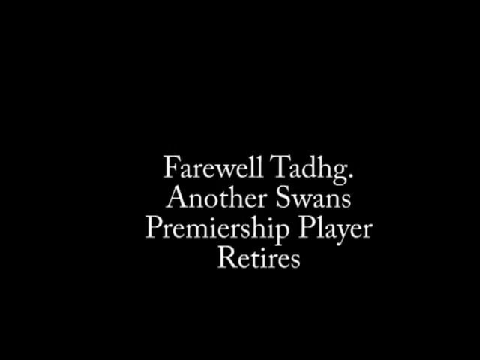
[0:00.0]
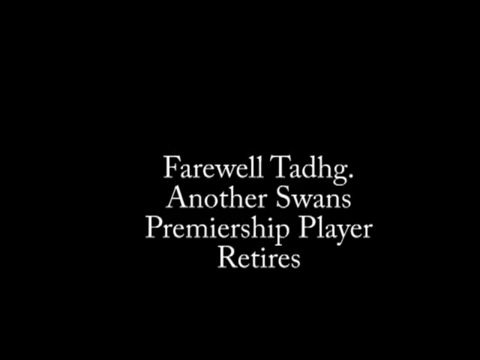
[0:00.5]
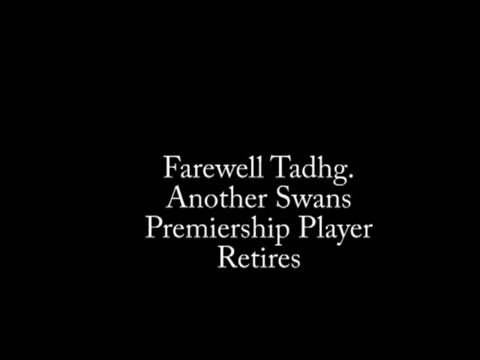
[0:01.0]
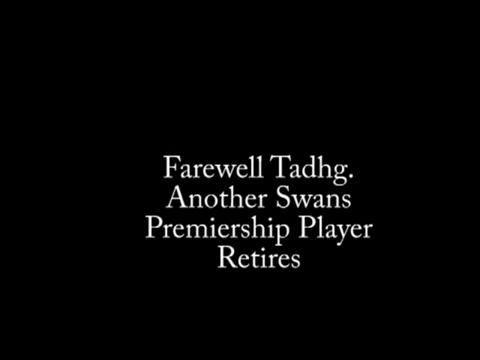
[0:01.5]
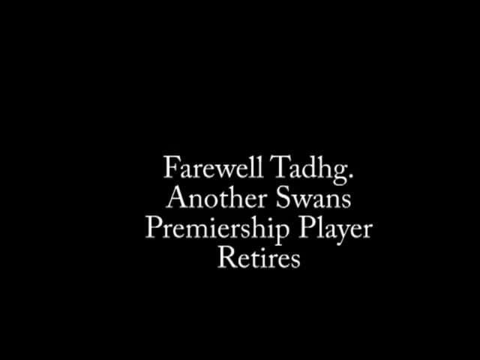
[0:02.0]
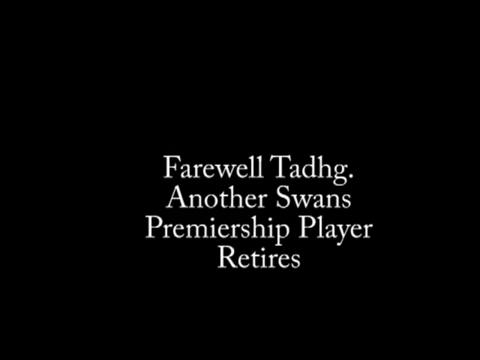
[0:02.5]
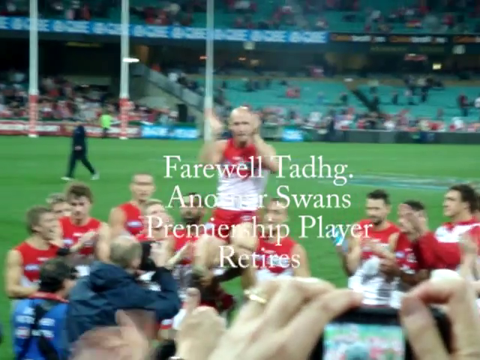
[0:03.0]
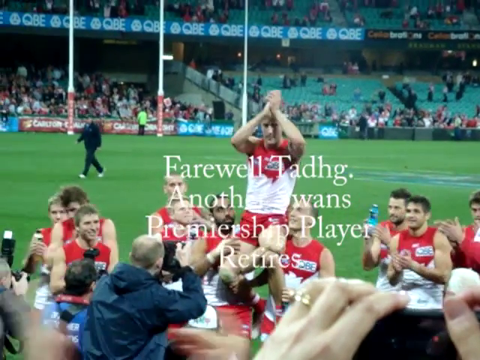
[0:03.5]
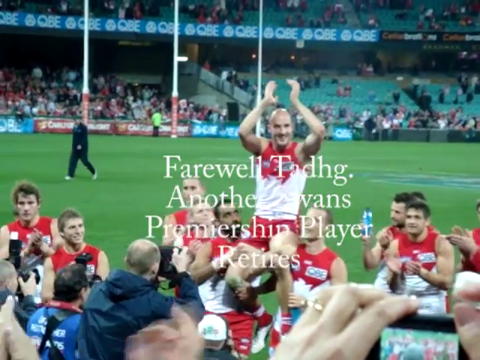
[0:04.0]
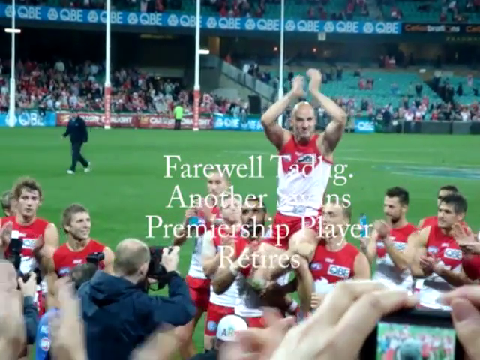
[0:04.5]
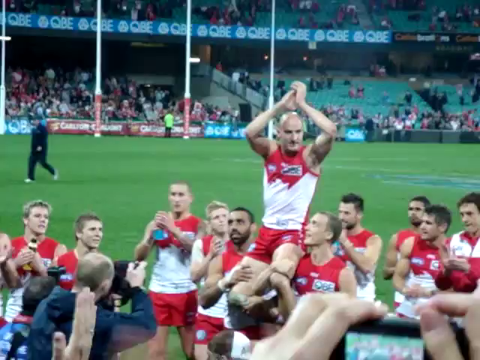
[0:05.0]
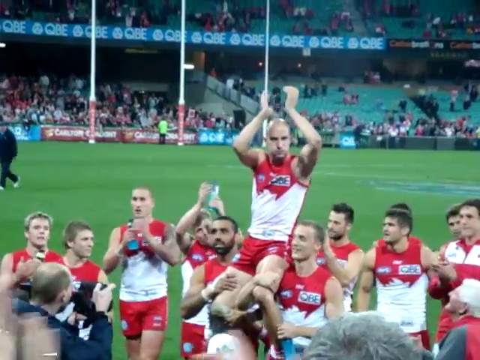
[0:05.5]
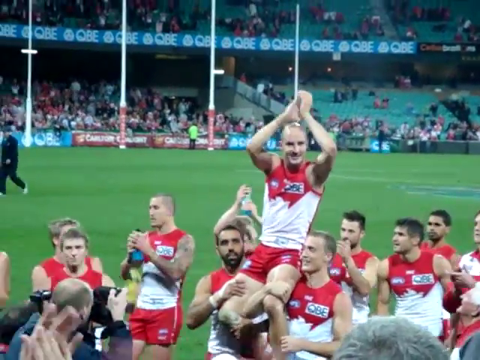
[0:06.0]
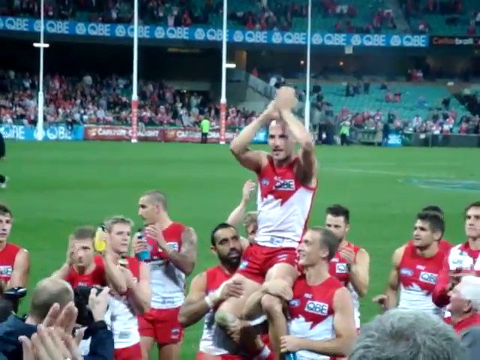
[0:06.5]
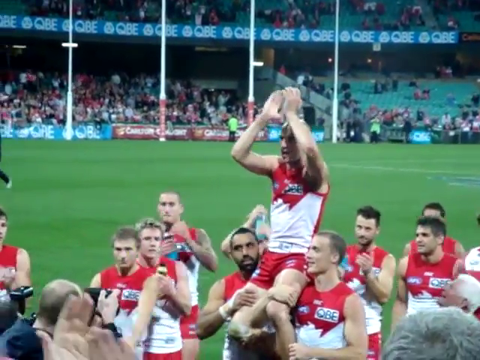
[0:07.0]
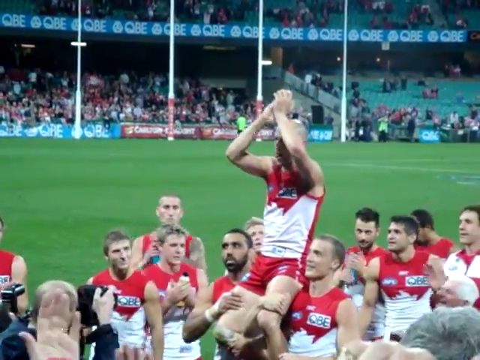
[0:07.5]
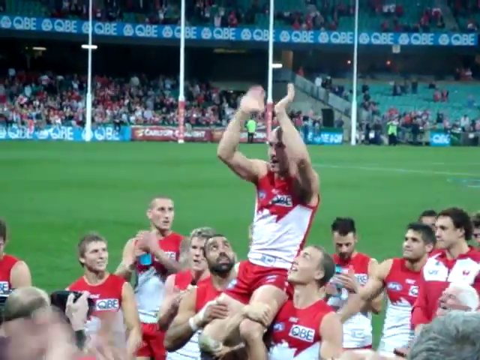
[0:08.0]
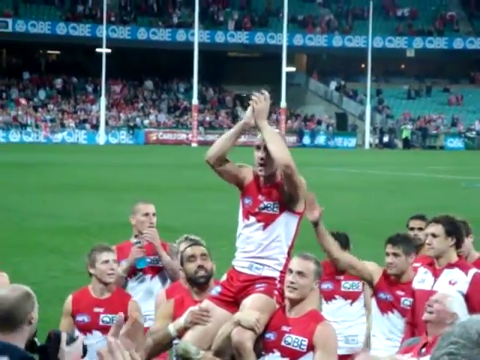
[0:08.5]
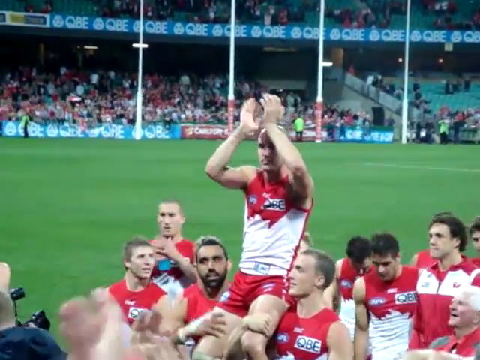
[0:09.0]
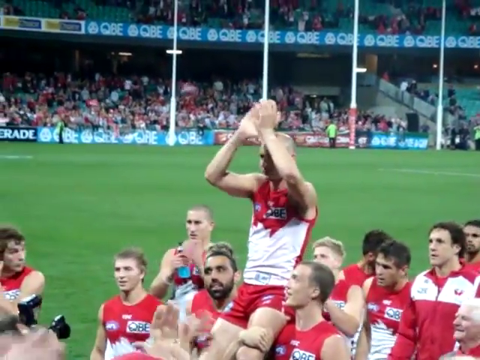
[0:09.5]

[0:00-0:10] The video opens on a text screen with white letters on a black background reading "Farewell Tadhg. Another Swans Premiership Player Retires." It then cuts to a man in a red and white jersey tank top and red shorts who is being held up by similarly dressed teammates. A group of players in the background clap and look at him as he is carried along the edge of the field. Green AstroTurf is visible in the background, with stadium bleachers behind it. The stadium is not full, but a good number of people are watching. Along the front of the bleachers, in the upper area as well as at ground level, are many blue banners with the letters QBE and a small logo next to them.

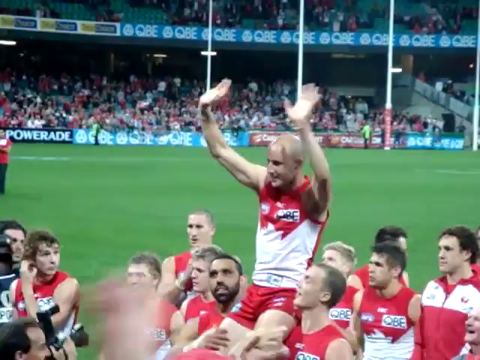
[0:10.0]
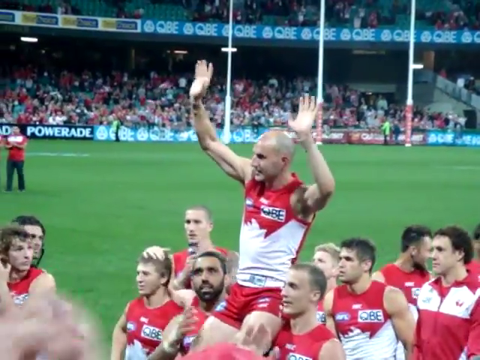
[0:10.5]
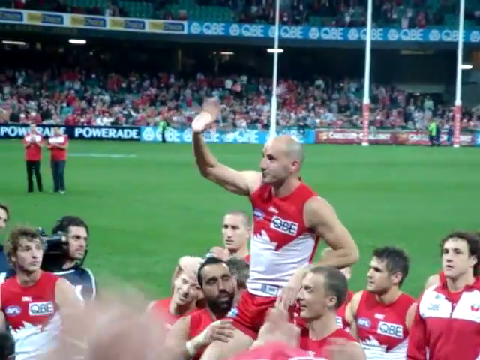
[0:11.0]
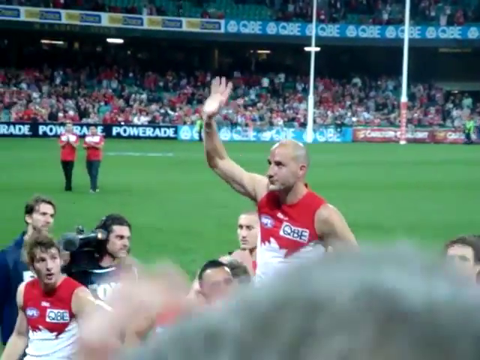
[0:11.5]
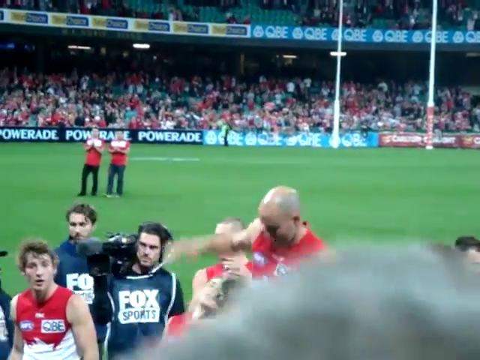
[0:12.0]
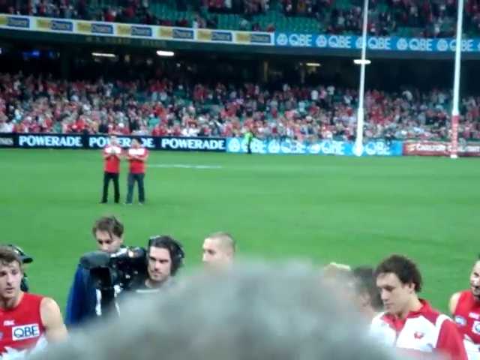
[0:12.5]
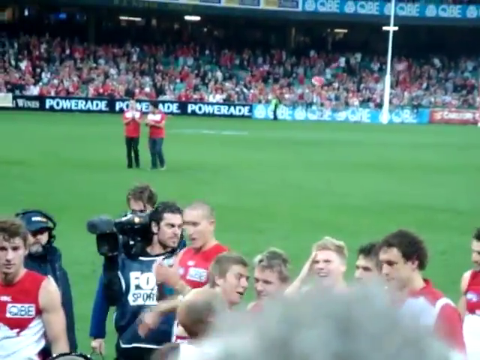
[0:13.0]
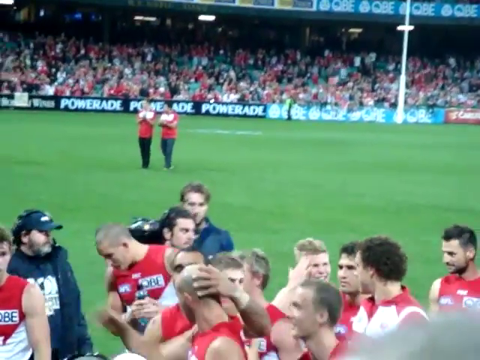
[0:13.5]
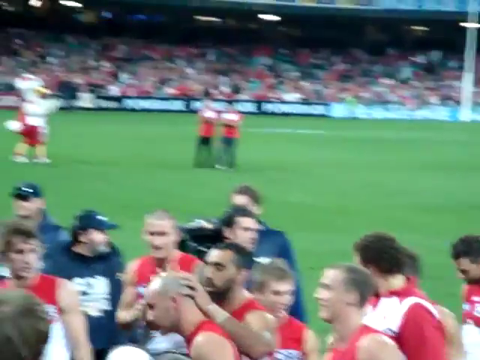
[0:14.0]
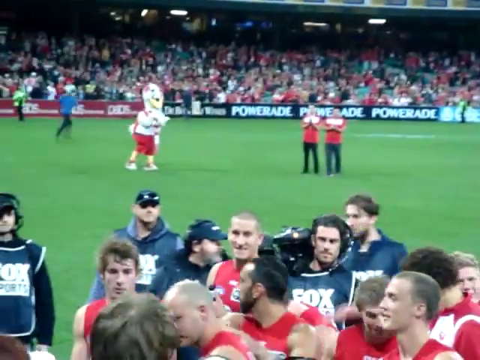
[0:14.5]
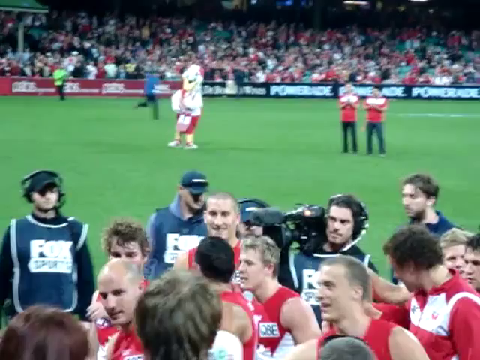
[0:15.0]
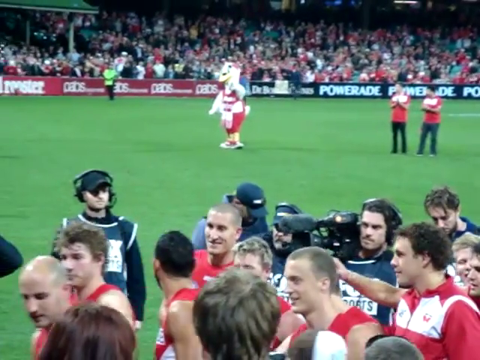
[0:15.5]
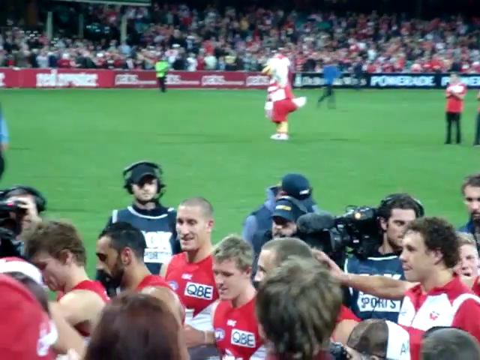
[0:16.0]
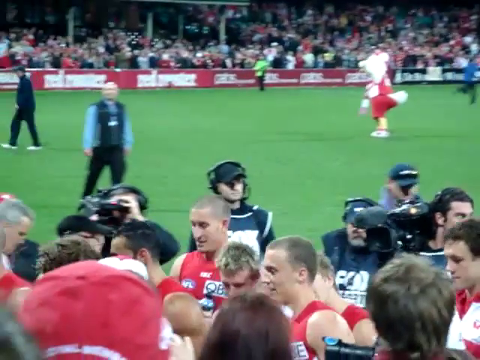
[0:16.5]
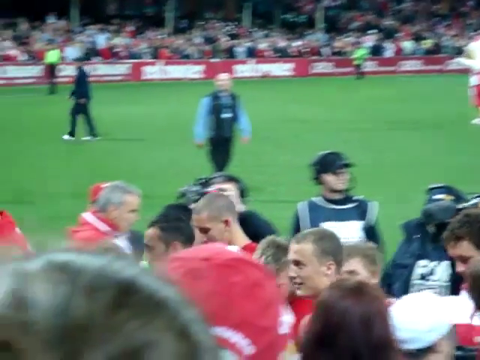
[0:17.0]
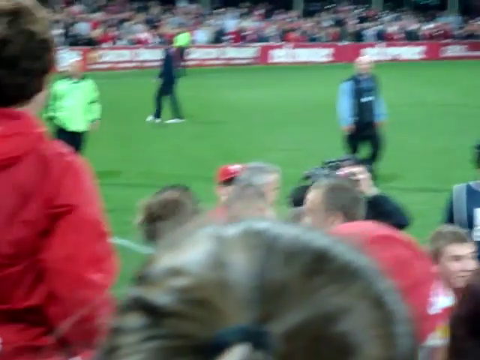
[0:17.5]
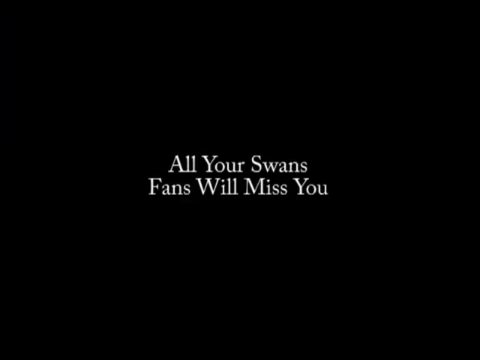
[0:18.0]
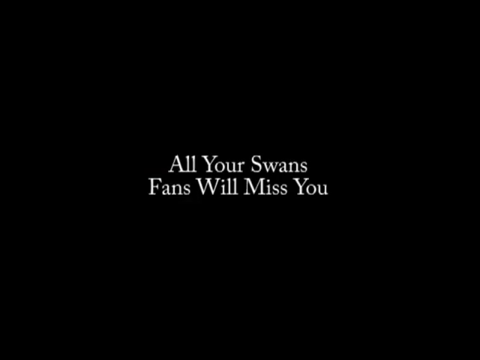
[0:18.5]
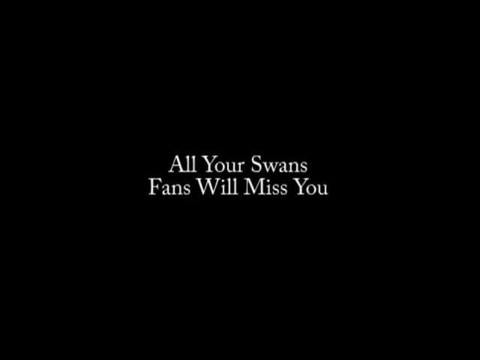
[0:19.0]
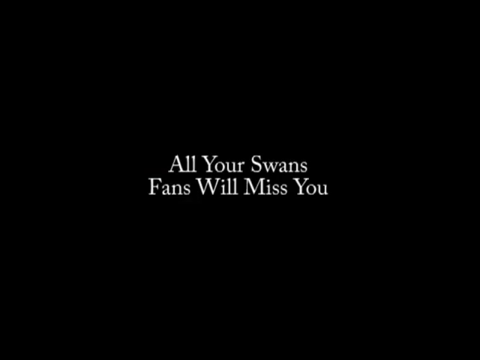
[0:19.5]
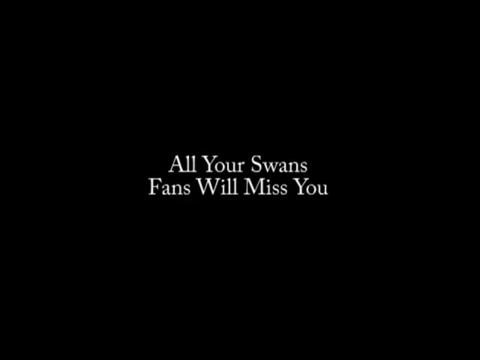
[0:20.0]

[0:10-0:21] The procession continues in an indoor European football arena. Two team members hold a man up on their shoulders, and he raises his hands in appreciation. He is bald, with his head very closely shaved. The various team members, all dressed in red and white uniforms with a tank top-style jersey and red shorts, watch him. Shortly afterwards, the player who has been carried along the arena slides down to join the rest of his teammates and keeps waving to the crowd. Cameramen and other technicians in dark uniforms are along the side in the background, behind the team members. The video then transitions to a black text screen with the statement in white letters, "All your Swans Fans Will Miss You."